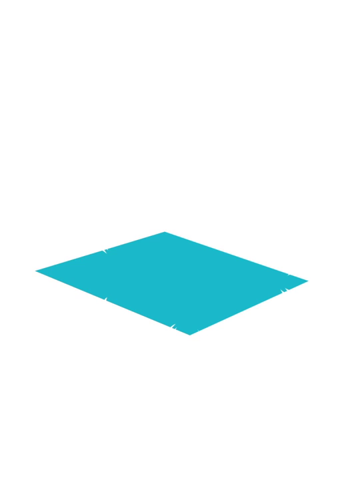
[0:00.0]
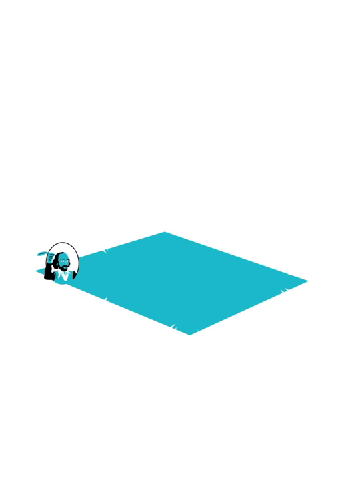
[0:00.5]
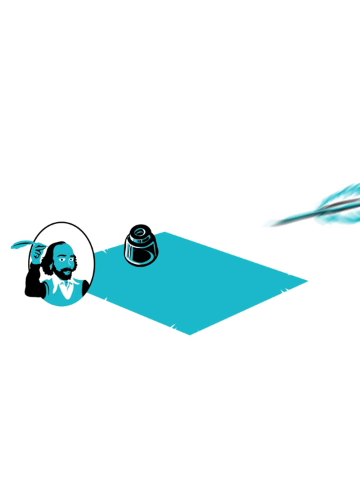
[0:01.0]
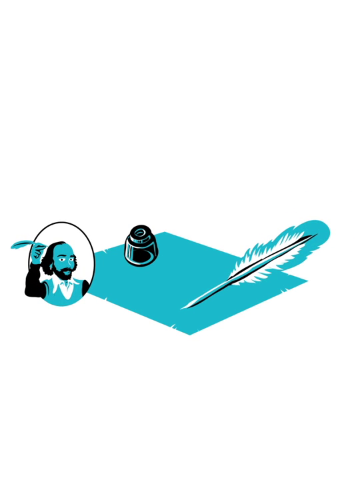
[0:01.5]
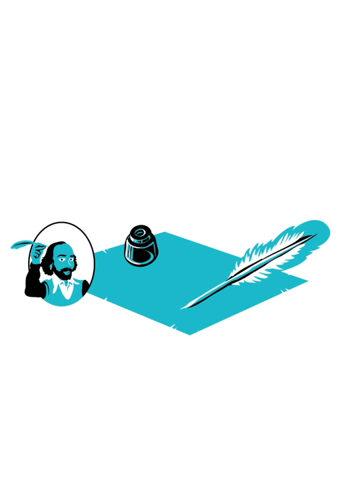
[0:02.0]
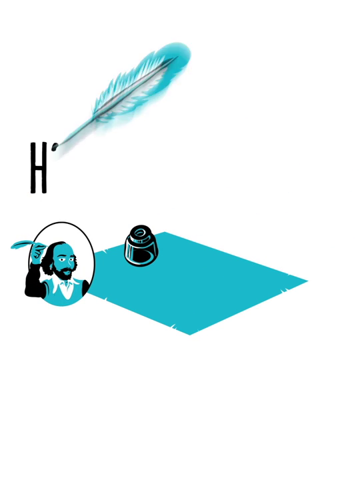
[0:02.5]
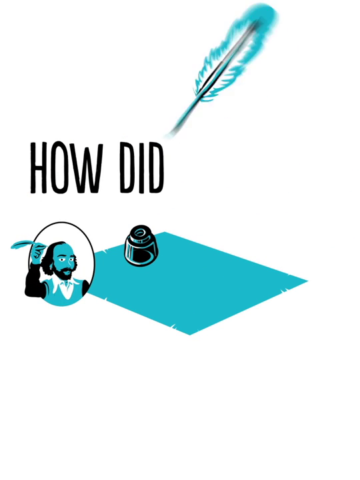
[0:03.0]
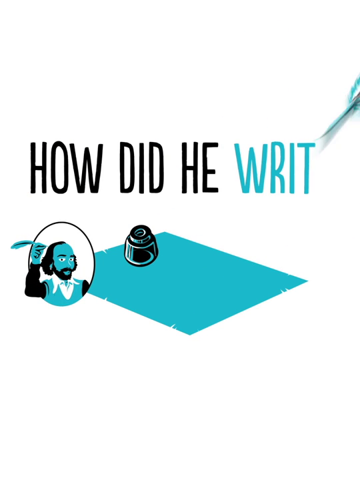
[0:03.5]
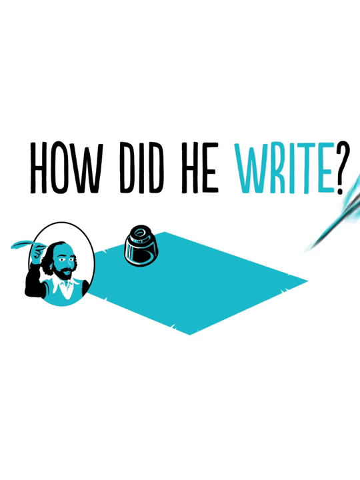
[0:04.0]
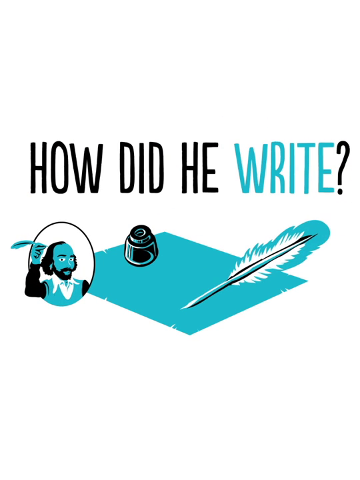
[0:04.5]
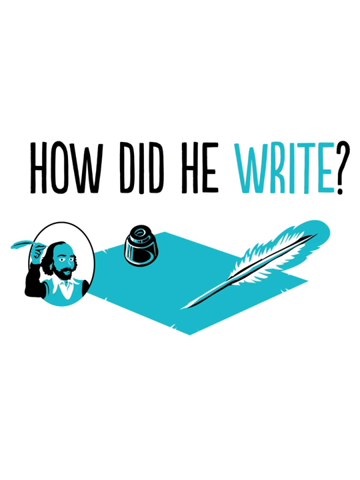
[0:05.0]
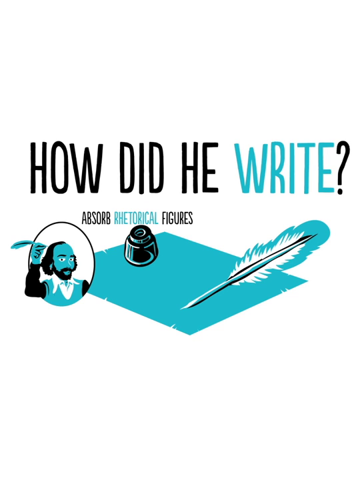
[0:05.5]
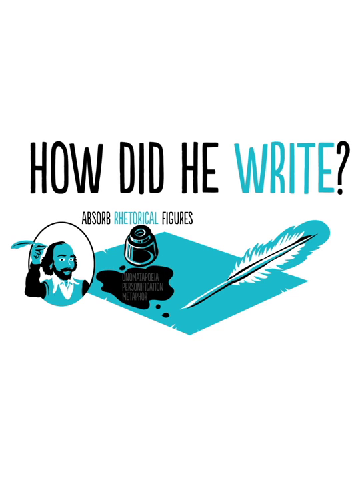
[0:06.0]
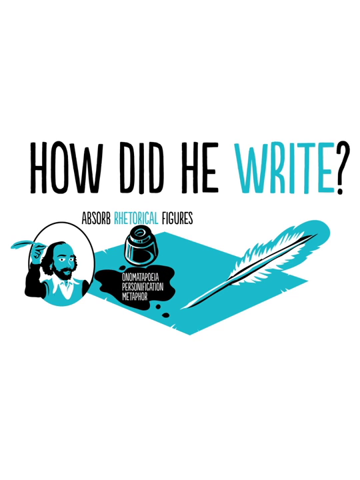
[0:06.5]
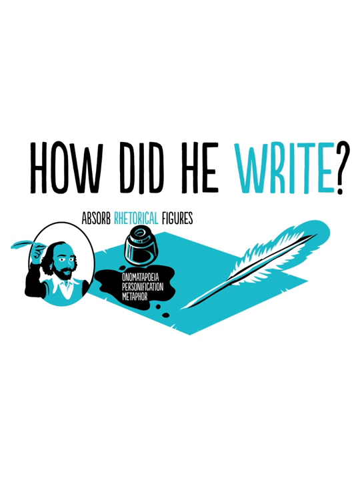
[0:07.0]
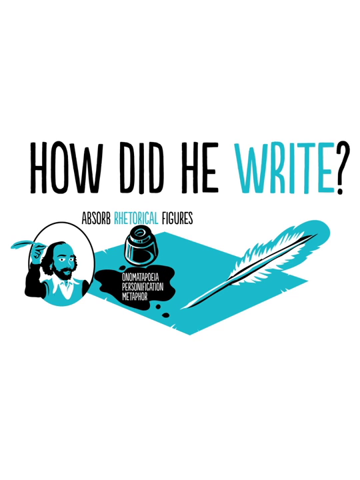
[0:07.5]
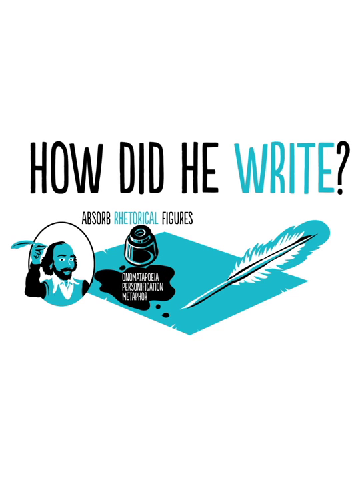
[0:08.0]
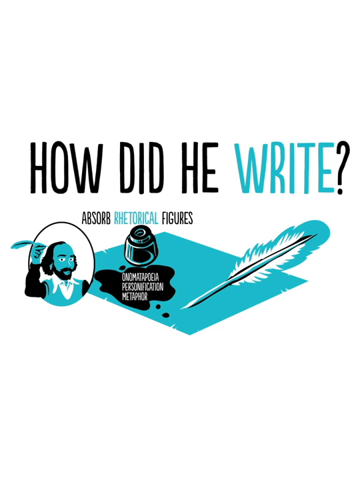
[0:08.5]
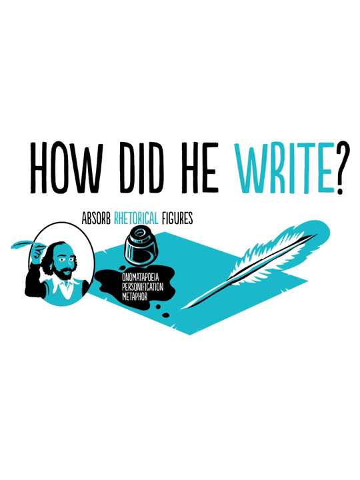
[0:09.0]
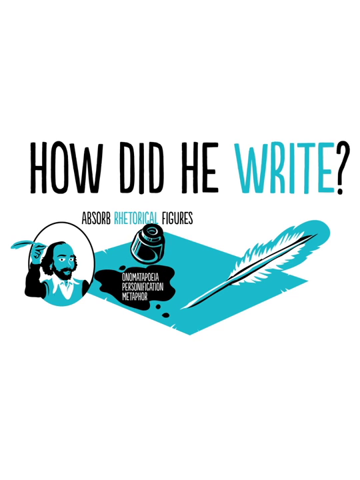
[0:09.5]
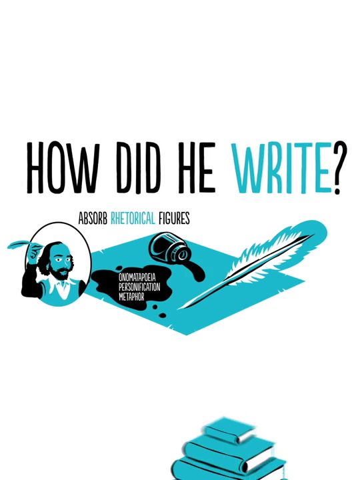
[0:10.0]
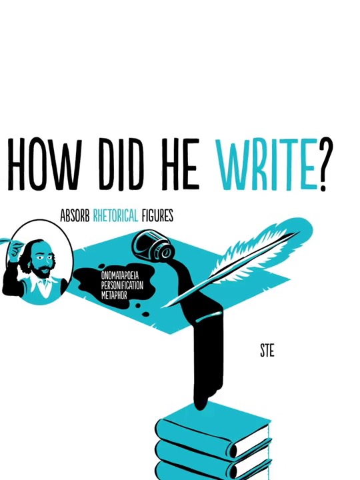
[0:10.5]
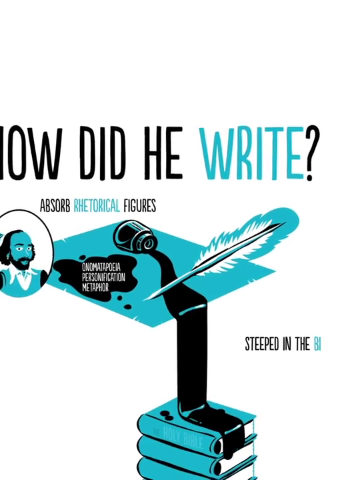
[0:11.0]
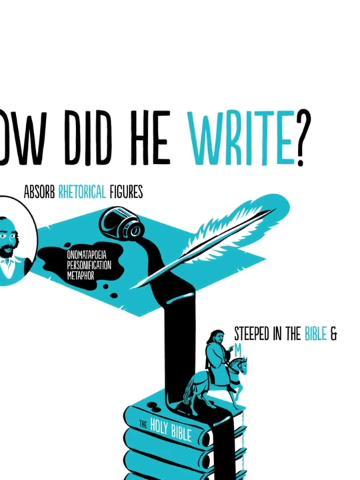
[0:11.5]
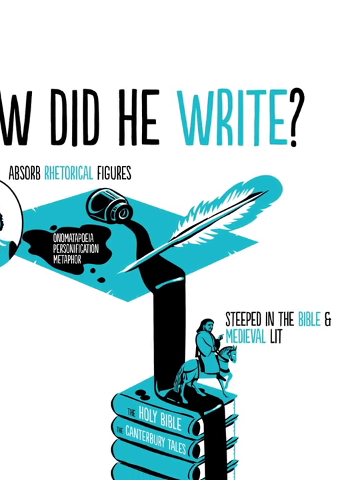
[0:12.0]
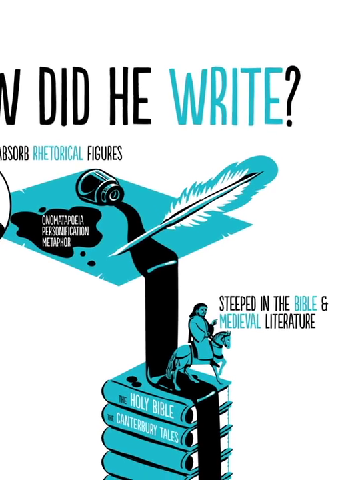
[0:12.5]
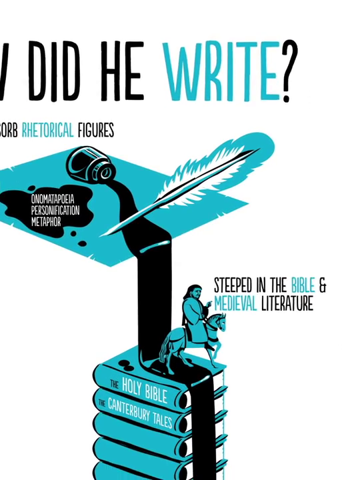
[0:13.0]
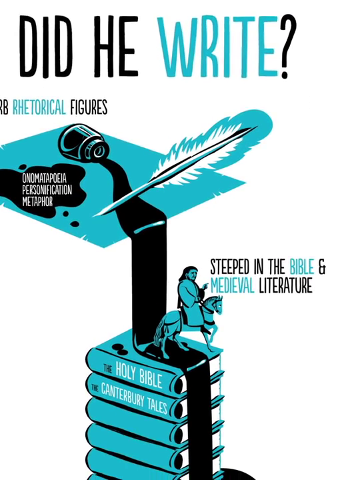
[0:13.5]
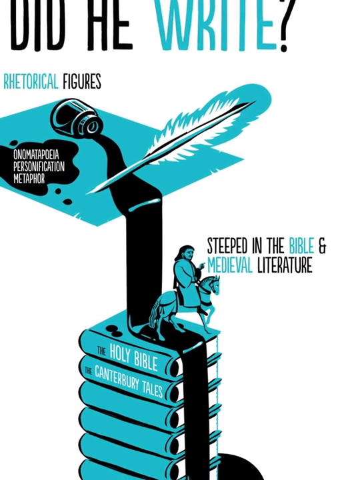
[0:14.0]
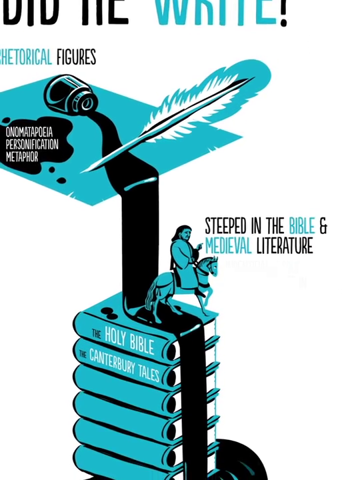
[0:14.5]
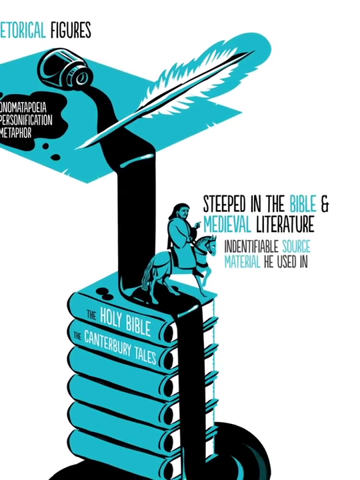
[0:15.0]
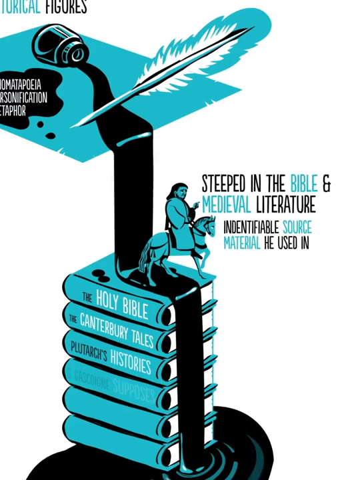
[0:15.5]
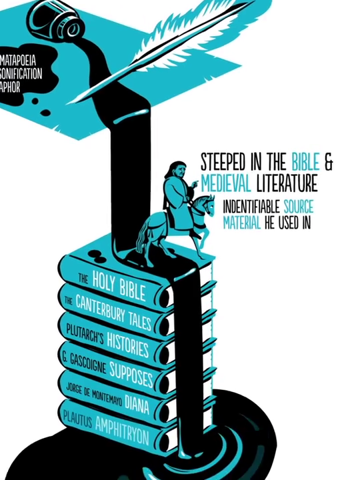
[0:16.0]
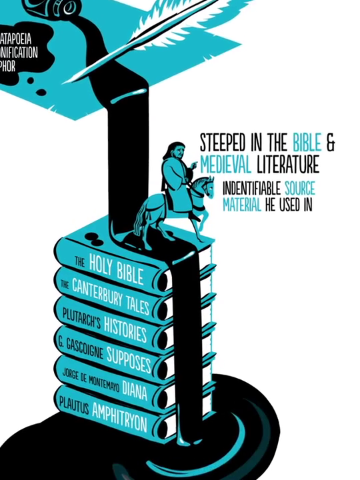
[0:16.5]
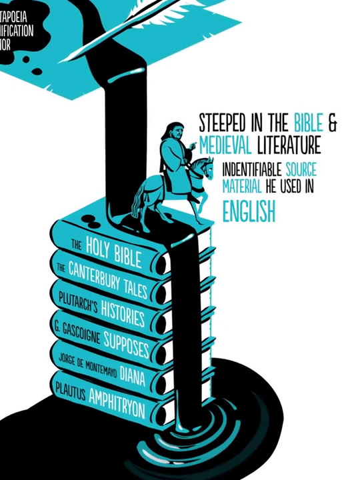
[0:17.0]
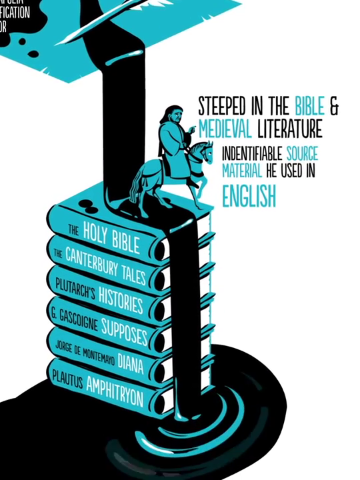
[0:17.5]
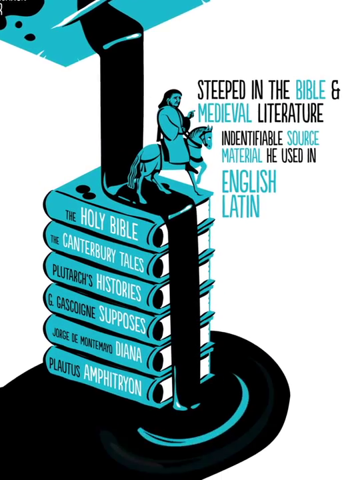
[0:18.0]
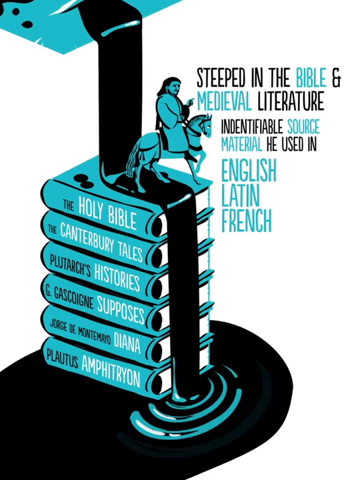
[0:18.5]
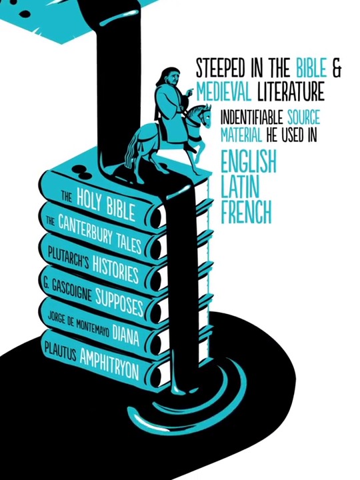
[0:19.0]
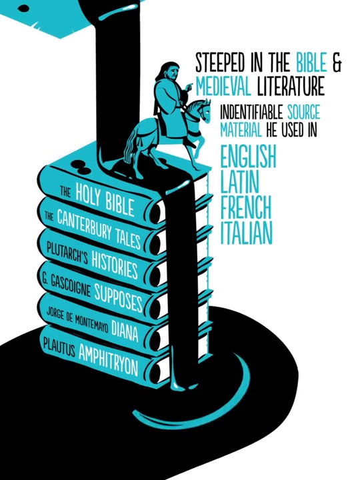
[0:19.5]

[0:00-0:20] The video opens on a white background. In the center is a blue diamond, arranged so that it looks like a rectangular object placed on an invisible floor, running diagonally from the bottom left to the center right. The entire video uses only that shade of blue along with black and white. On the left-hand corner of the diamond, a cartoon portrait of Shakespeare appears in an oval outline, followed by a bottle of ink. A large blue quill hovers for a moment before appearing to write the caption "How did he write?" across the screen. A drop of ink falls from overhead onto the diamond, leaving a blob. The ink bottle then turns over, spilling onto the diamond. The ink appears to run off the right-hand side of the rectangle, forming a stream that runs onto a stack of books below the diamond and then puddles beneath and around the books, with an animation of ripples moving out from where the stream pours into the puddle.